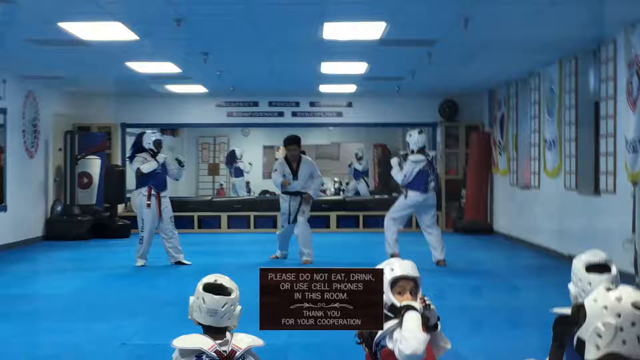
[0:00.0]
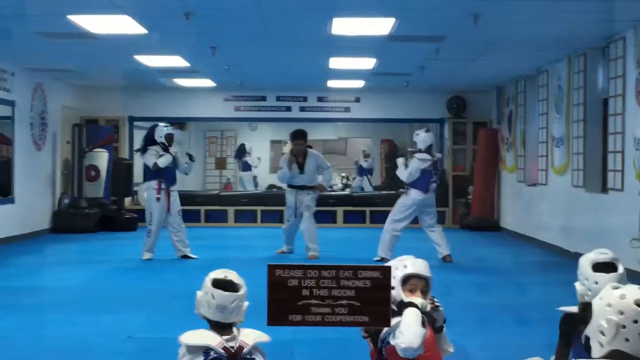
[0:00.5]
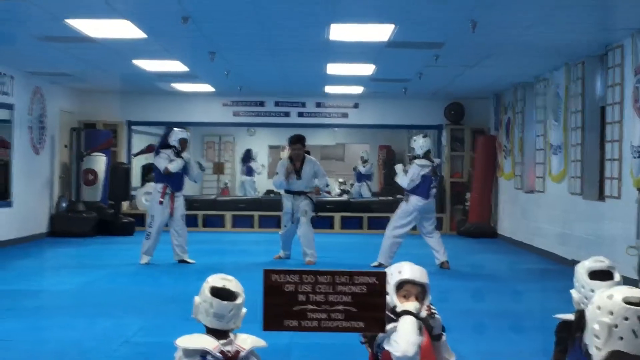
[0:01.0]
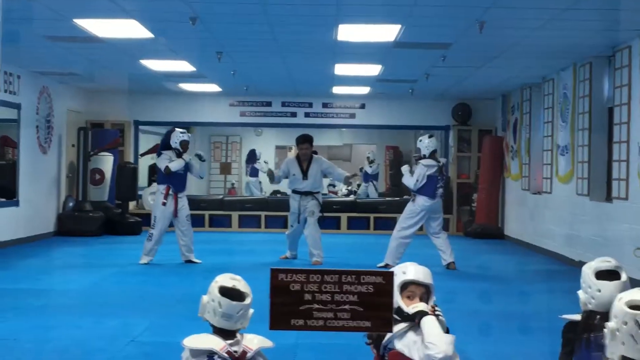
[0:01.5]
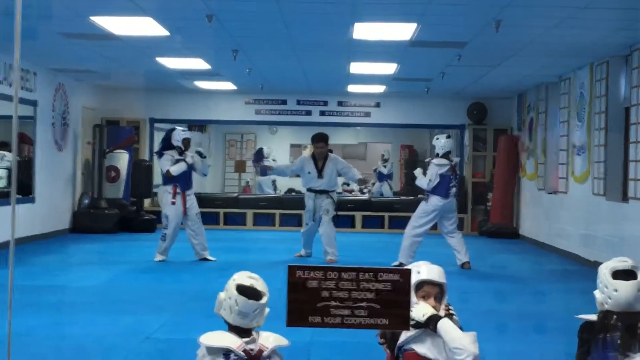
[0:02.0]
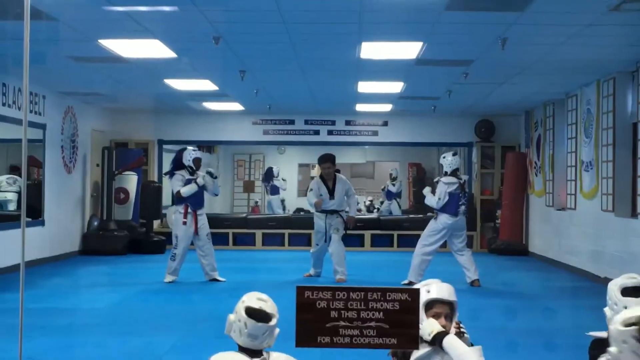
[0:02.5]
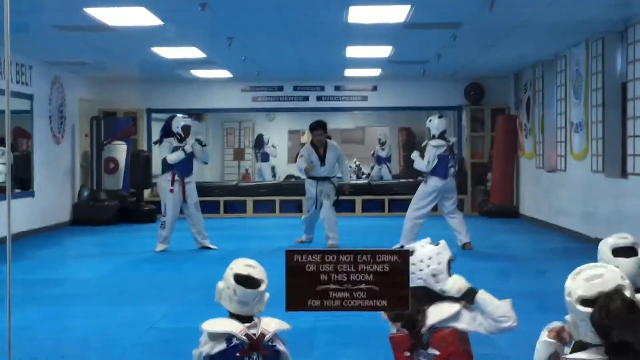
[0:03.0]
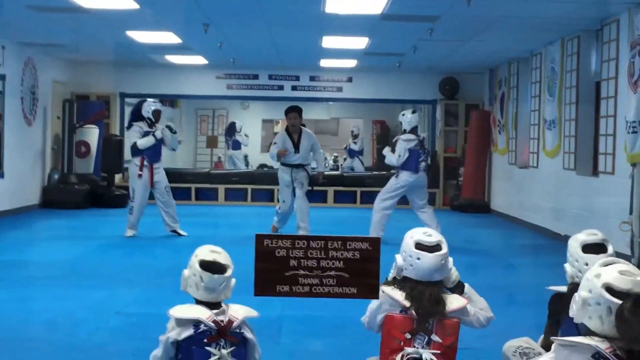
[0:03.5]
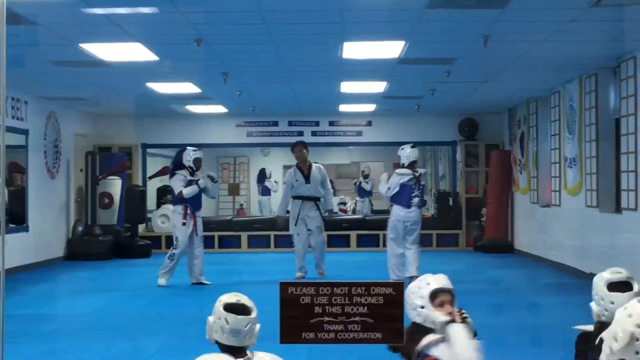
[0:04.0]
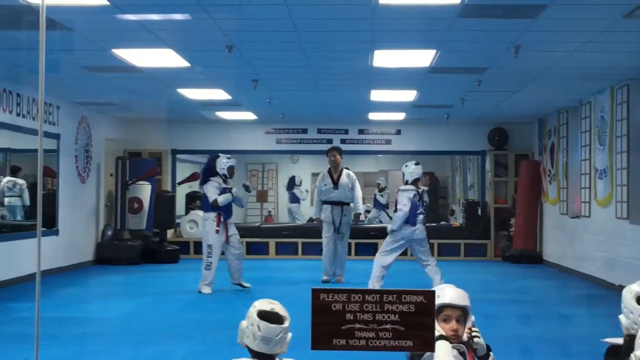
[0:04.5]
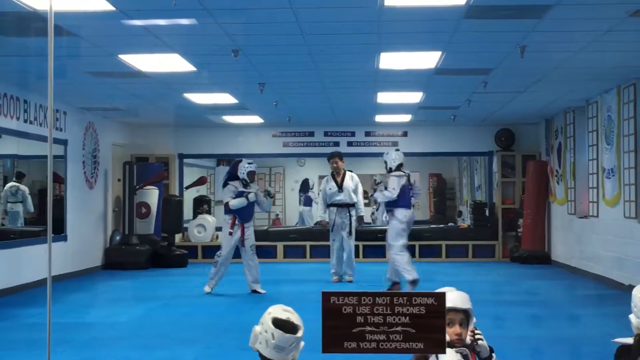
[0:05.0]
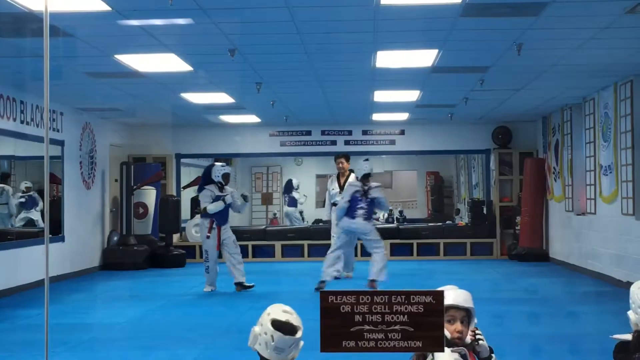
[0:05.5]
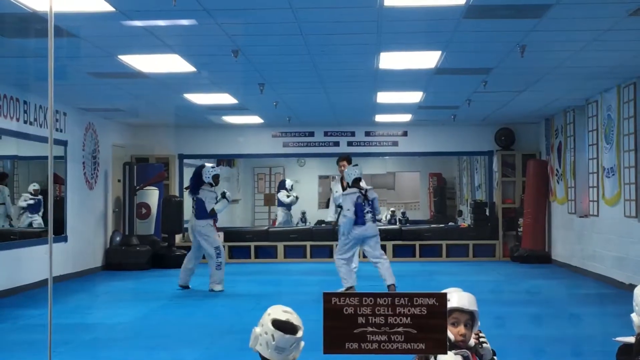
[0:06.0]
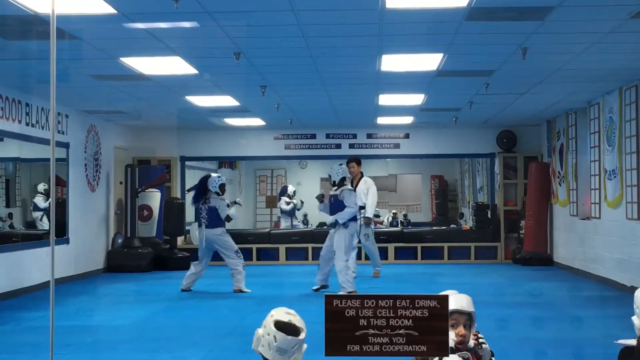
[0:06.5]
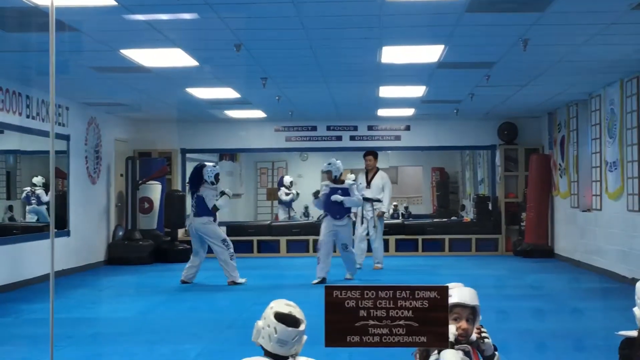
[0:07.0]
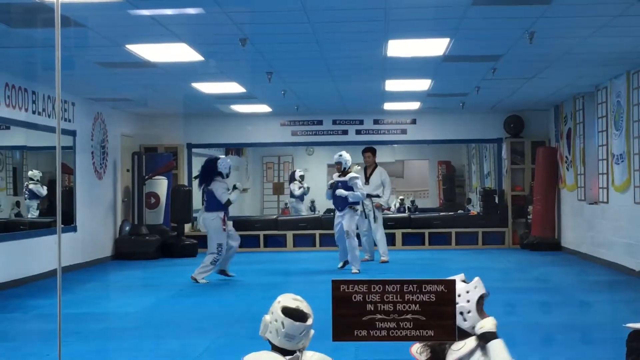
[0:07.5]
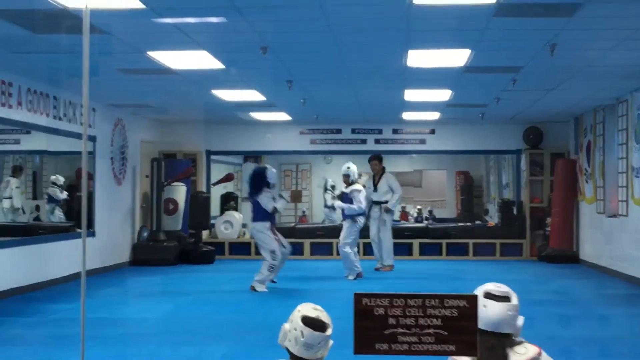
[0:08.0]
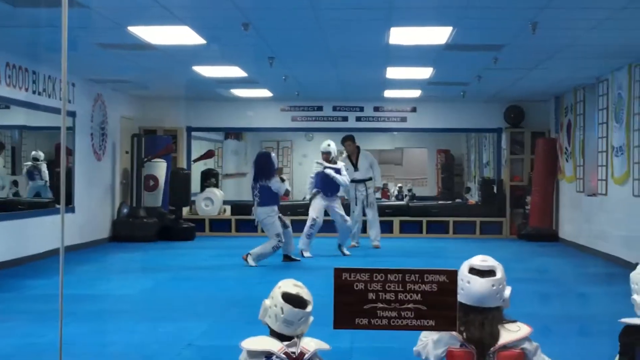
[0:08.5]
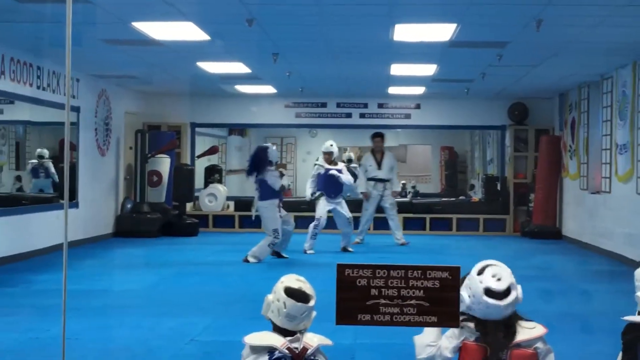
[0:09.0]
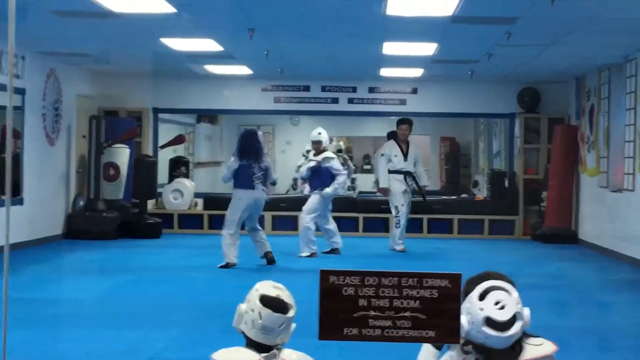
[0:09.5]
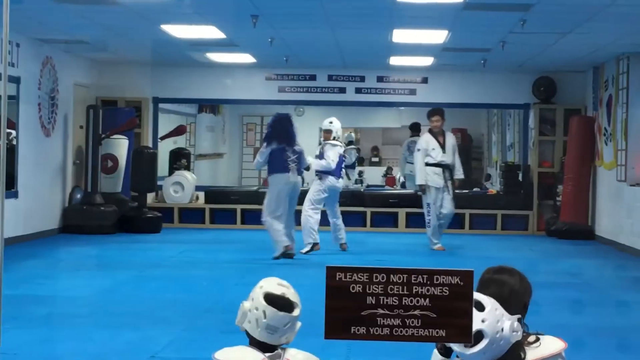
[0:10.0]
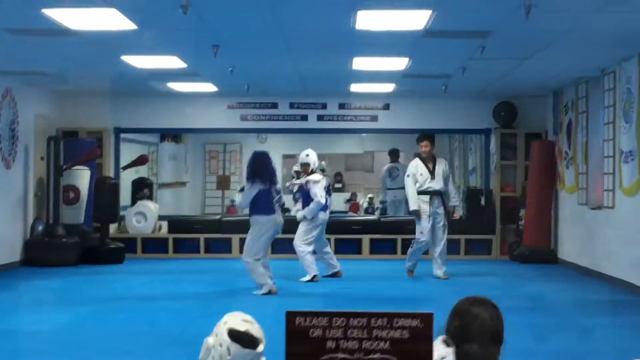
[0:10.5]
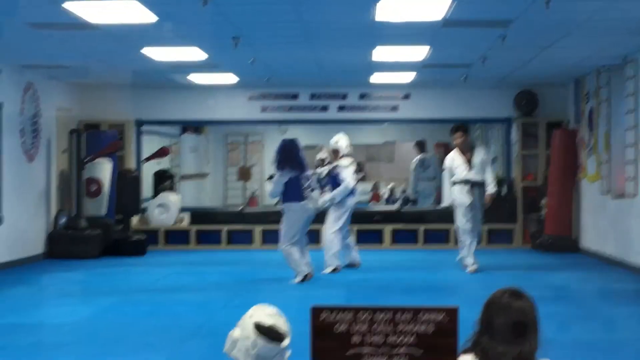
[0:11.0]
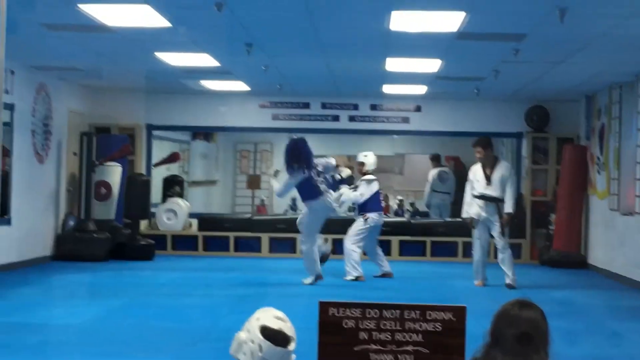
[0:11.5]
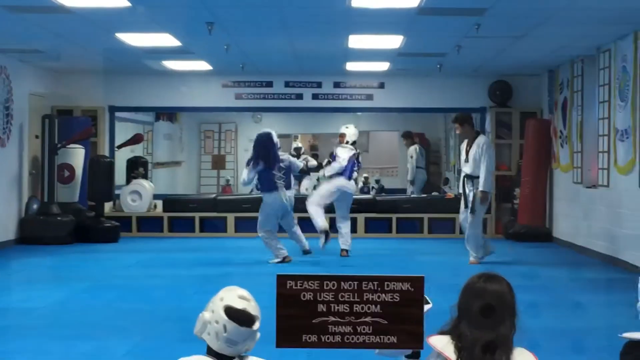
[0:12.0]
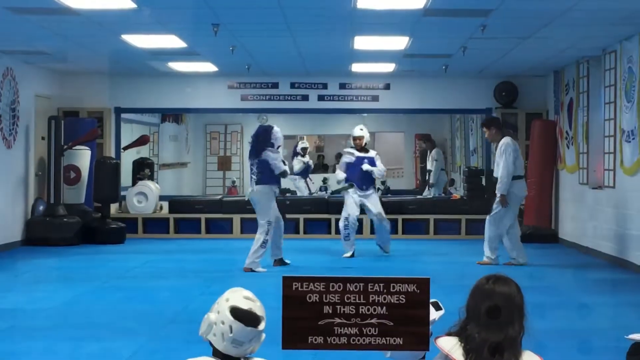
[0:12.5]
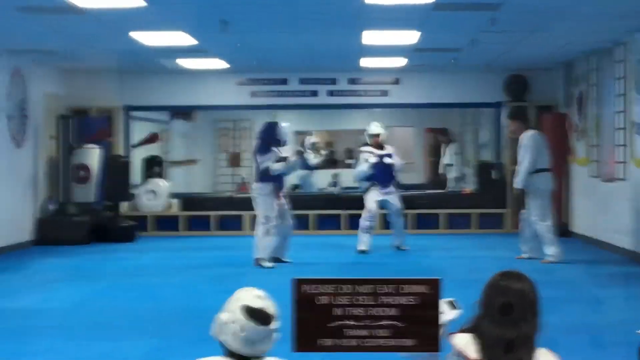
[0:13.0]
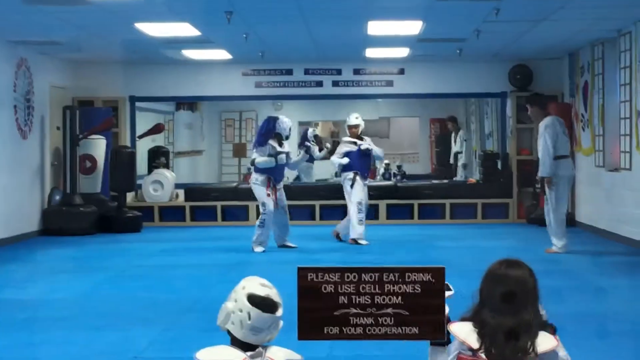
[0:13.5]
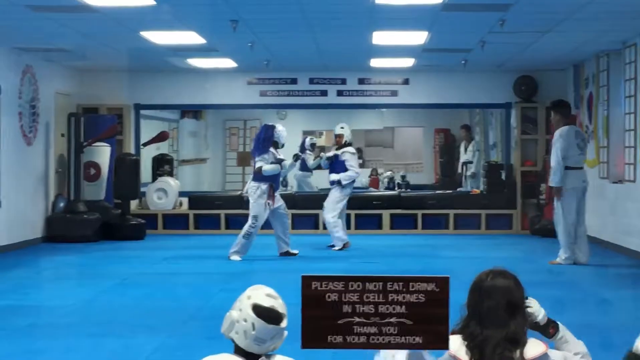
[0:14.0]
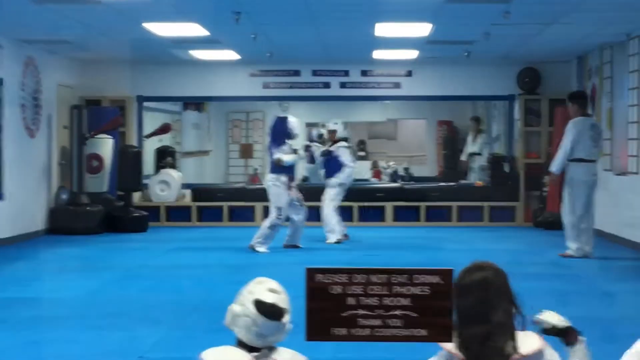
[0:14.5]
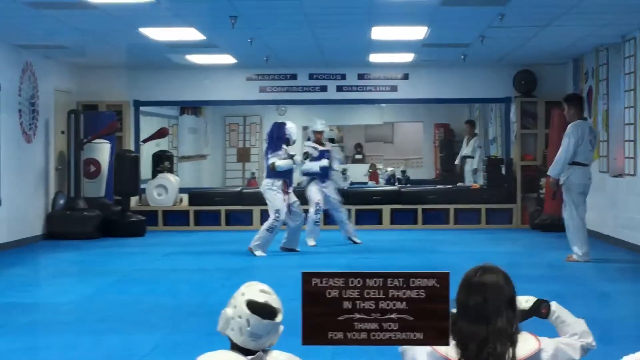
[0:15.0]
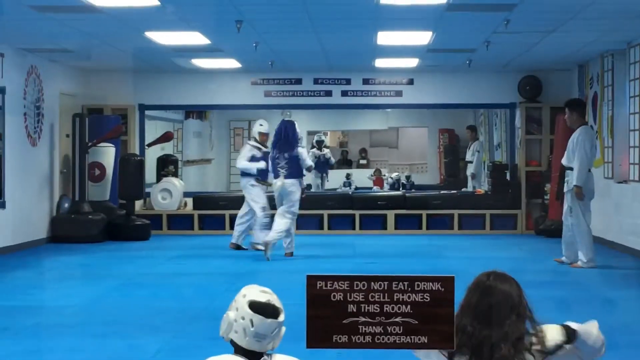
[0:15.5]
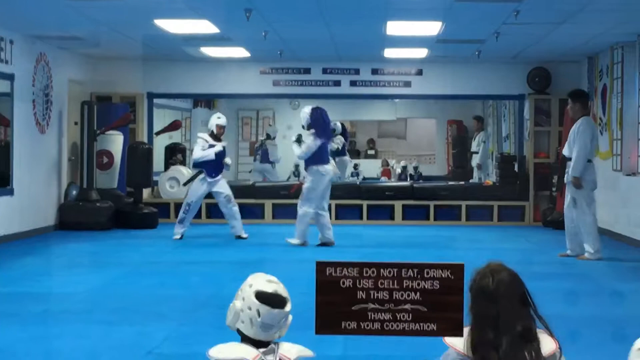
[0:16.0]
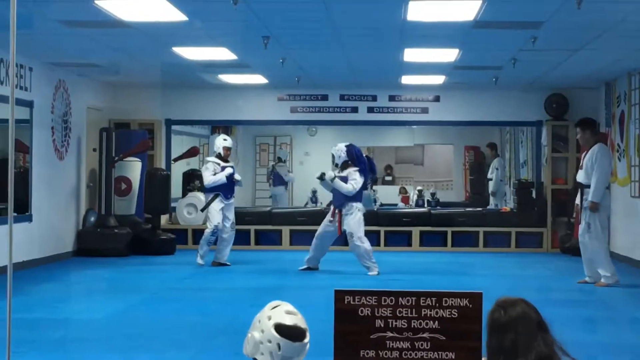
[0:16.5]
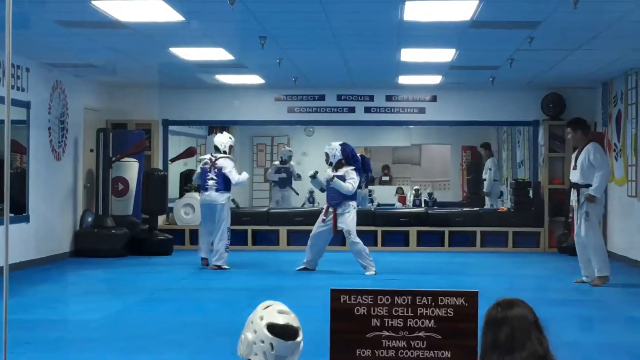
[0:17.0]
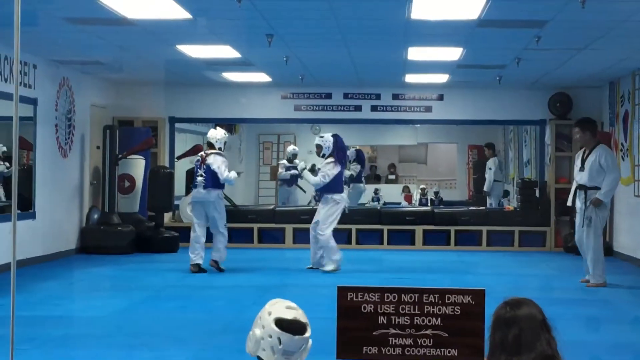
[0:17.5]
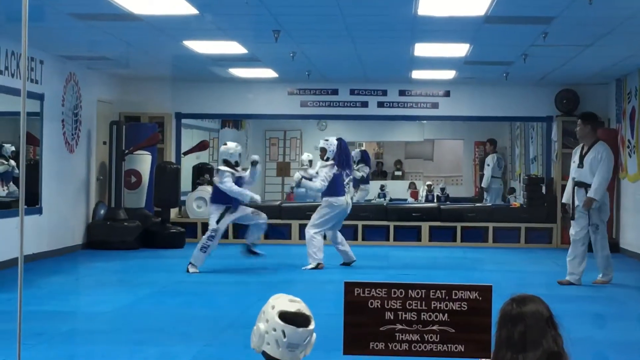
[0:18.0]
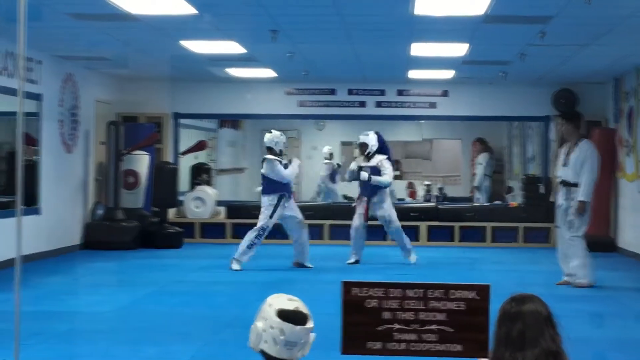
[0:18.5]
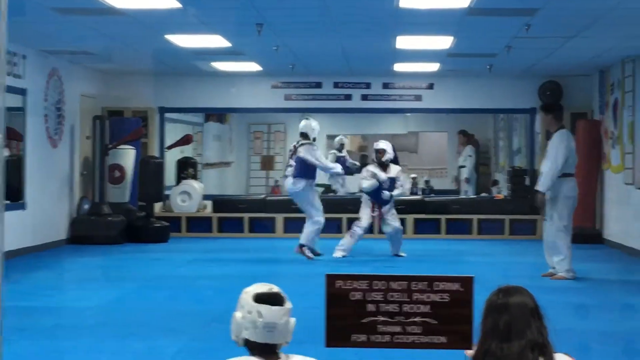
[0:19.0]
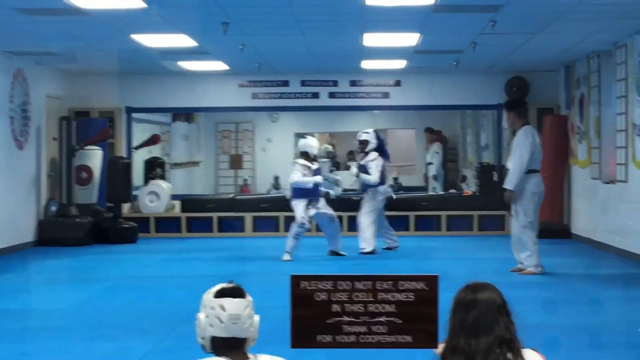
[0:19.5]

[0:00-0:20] The video opens inside a building that looks like a fighter's arena. The flooring is a very bright blue and the walls are white, with six lights on the ceiling in a square shape. In the middle stands a man who appears to be the sensei, and to his left and right are two people wearing headgear and white outfits with blue chest pieces. At the bottom middle of the frame is the text "please do not eat, drink, or use cell phones in this room." Next to it at the bottom, some children watch the fight, and one of them looks back toward the camera. The adult gets ready and he says, "okay, go fight." The person on the right is bouncier than the one on the left, who waits. The two sort of circle each other, going back and forth and making many leg movements as they try to kick their opponent, but they do not actually strike each other. On the far right wall there appear to be mirrors of some sort, and on the back wall is a large rectangular mirror that reflects what is happening behind the camera.